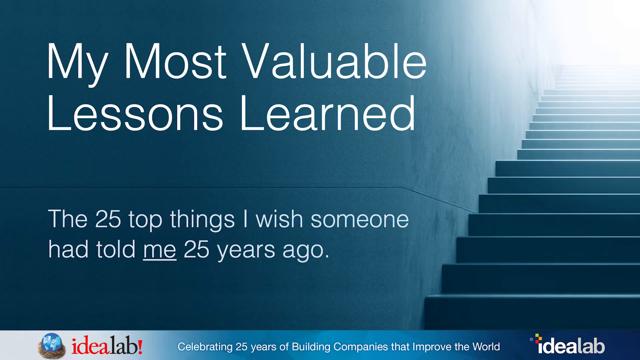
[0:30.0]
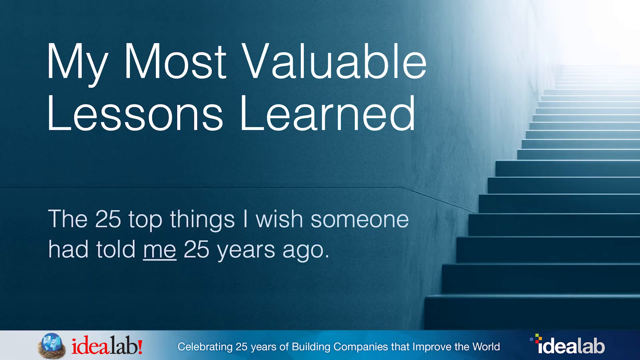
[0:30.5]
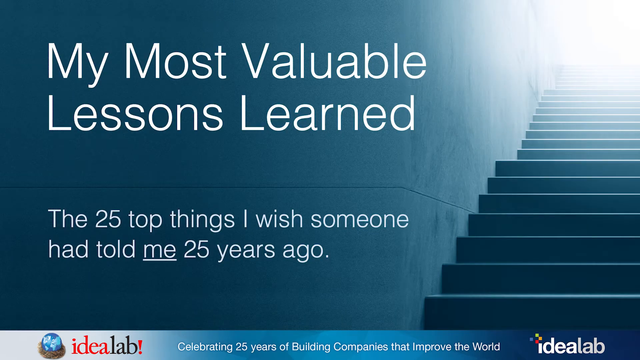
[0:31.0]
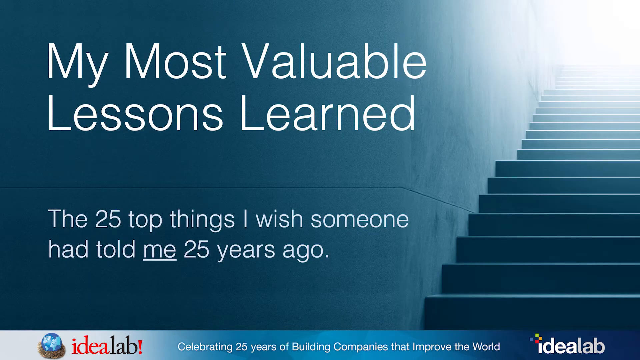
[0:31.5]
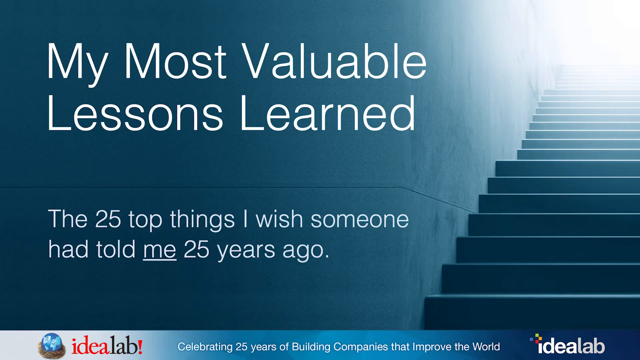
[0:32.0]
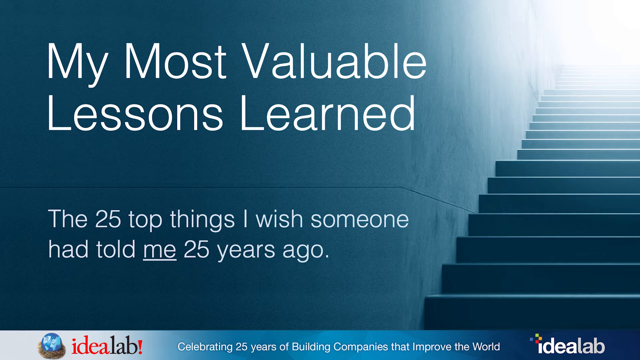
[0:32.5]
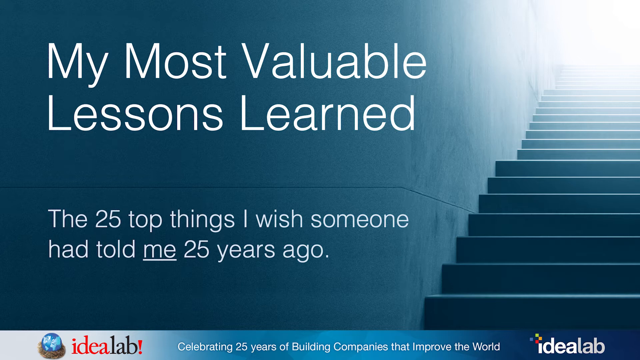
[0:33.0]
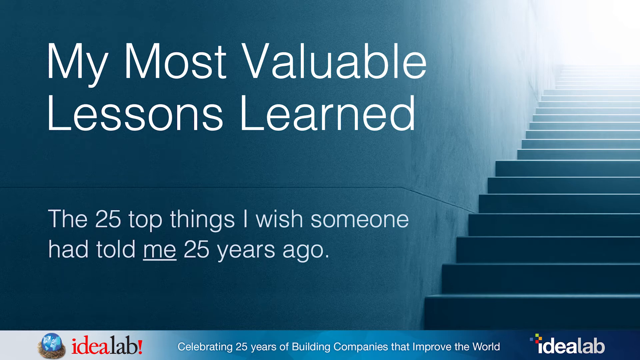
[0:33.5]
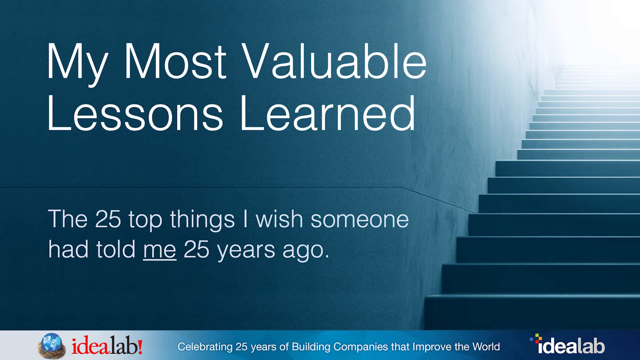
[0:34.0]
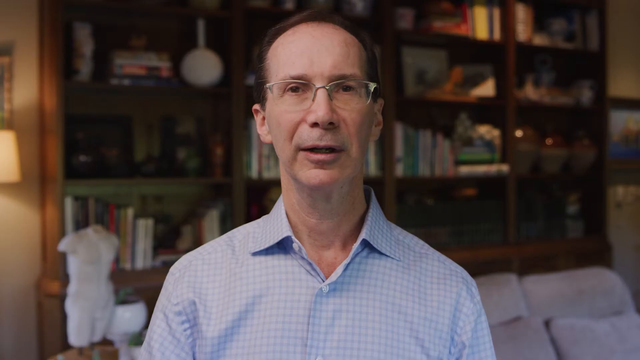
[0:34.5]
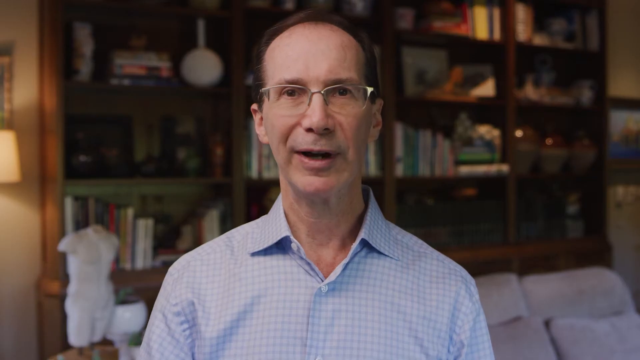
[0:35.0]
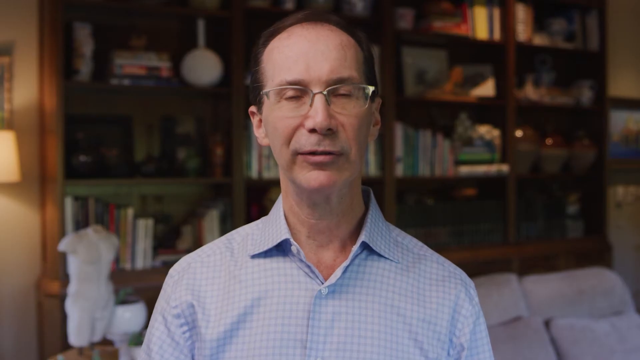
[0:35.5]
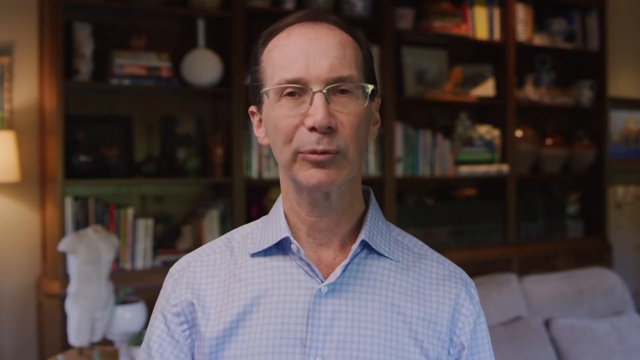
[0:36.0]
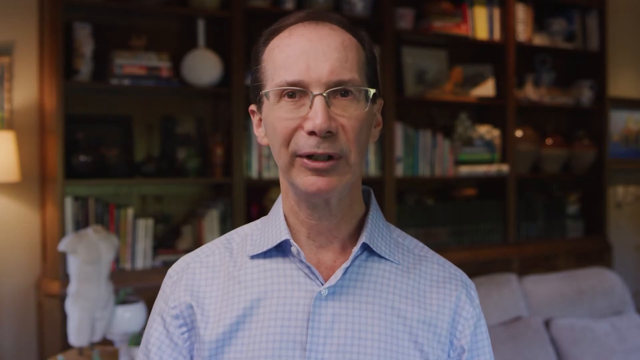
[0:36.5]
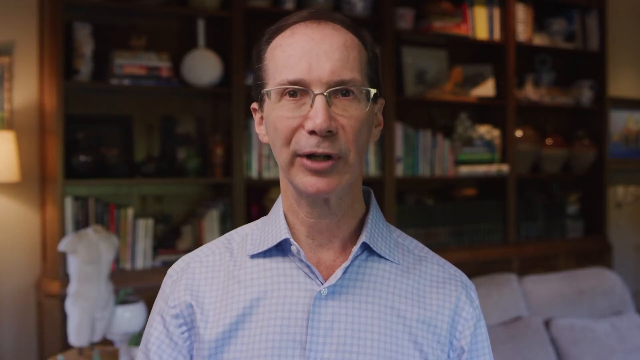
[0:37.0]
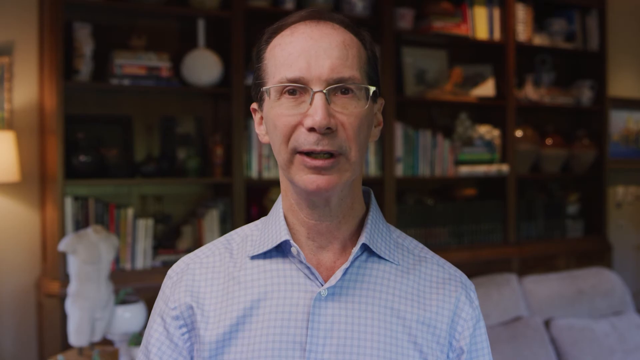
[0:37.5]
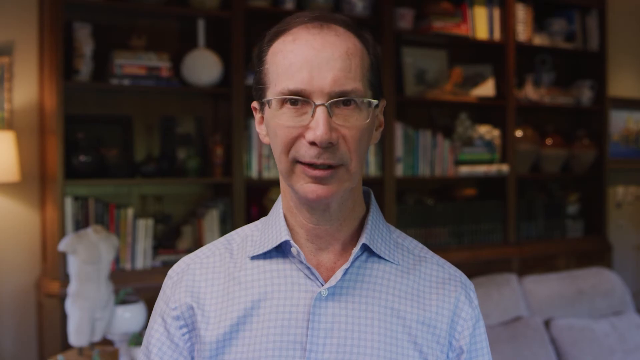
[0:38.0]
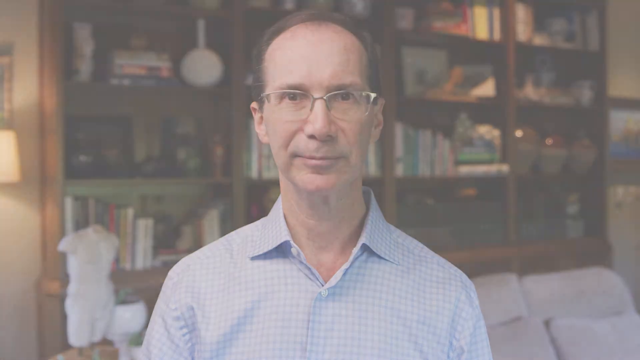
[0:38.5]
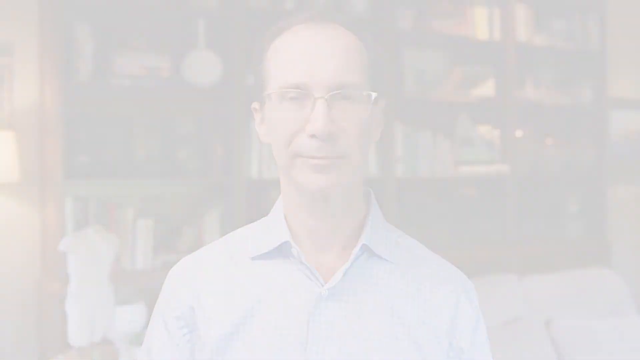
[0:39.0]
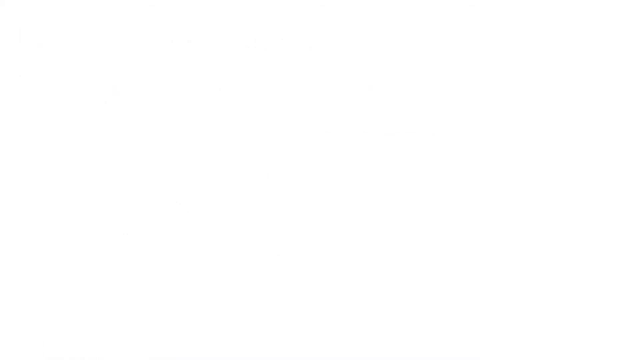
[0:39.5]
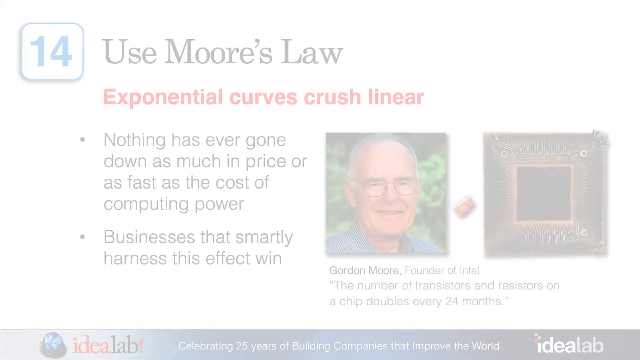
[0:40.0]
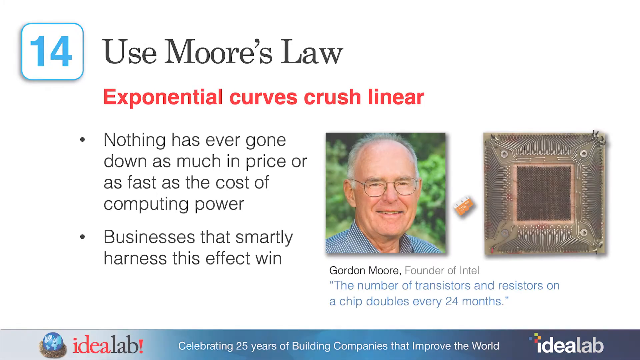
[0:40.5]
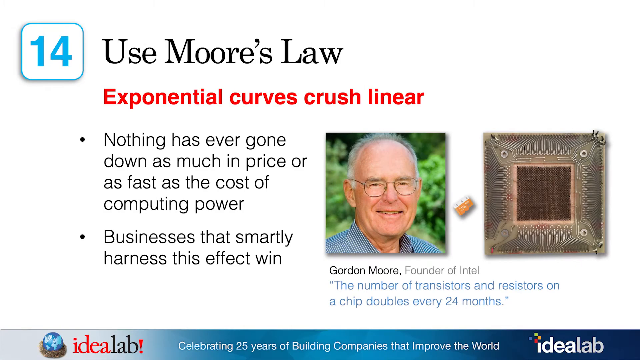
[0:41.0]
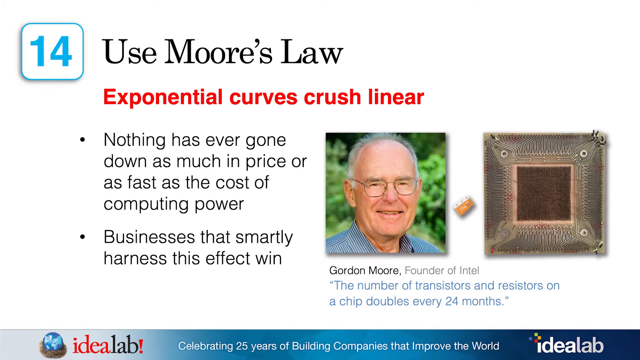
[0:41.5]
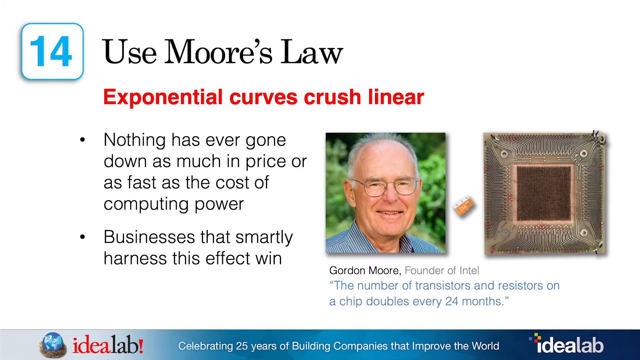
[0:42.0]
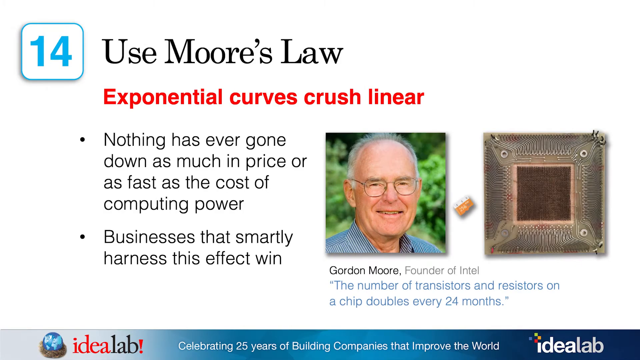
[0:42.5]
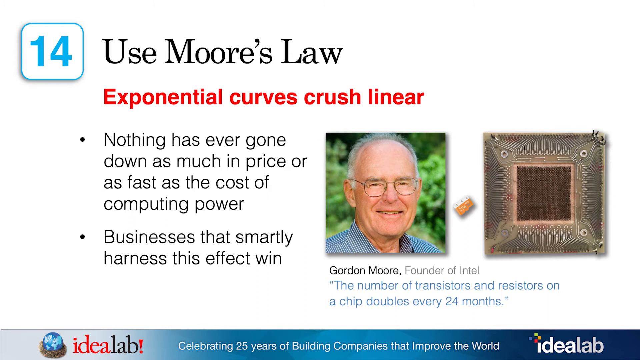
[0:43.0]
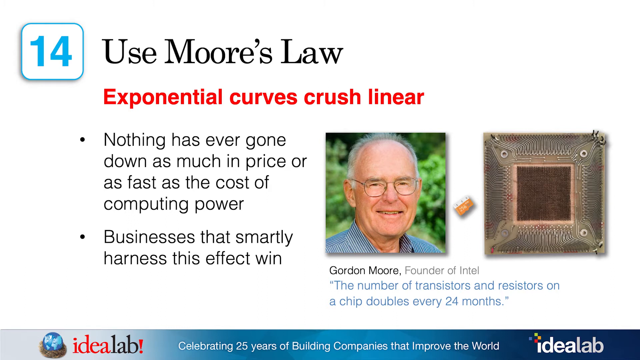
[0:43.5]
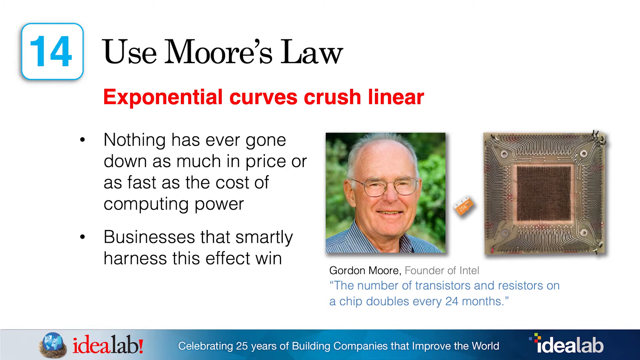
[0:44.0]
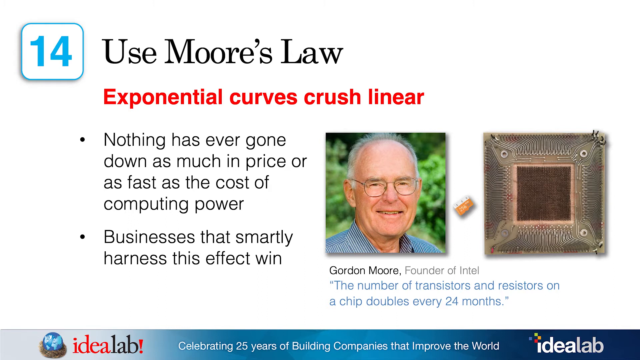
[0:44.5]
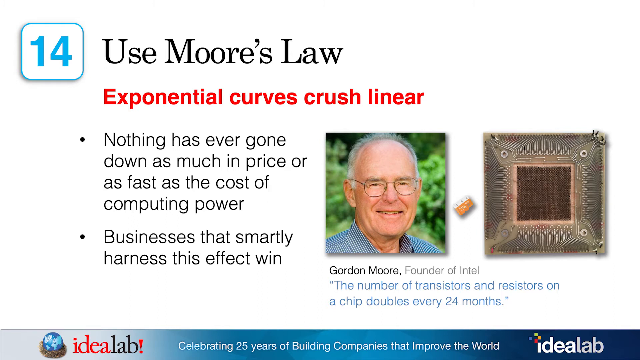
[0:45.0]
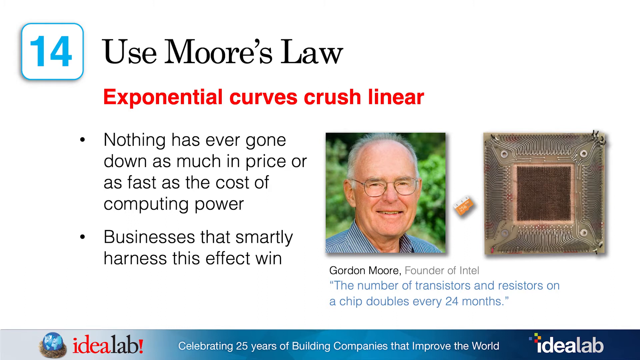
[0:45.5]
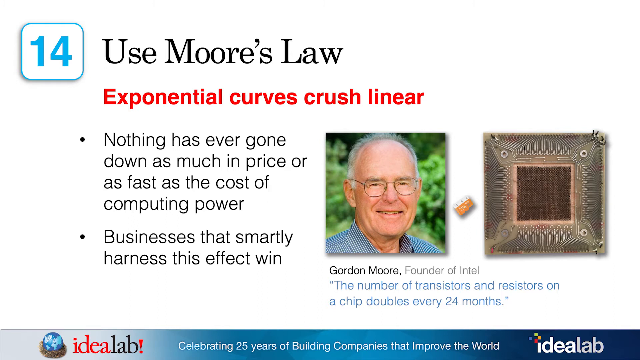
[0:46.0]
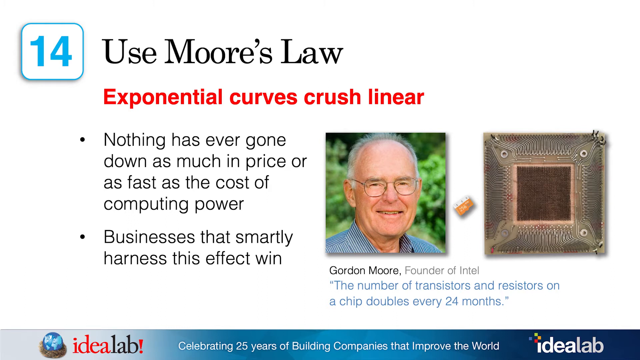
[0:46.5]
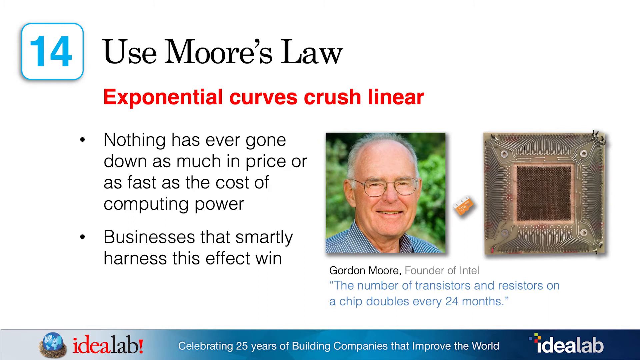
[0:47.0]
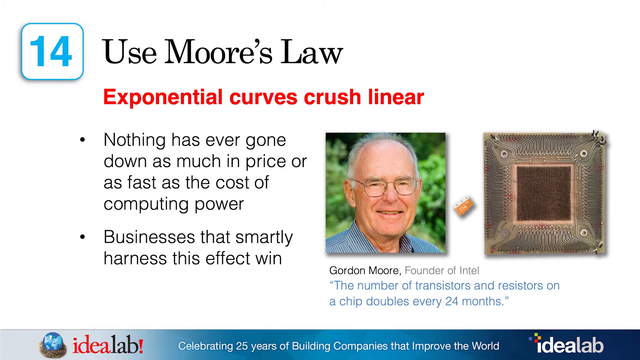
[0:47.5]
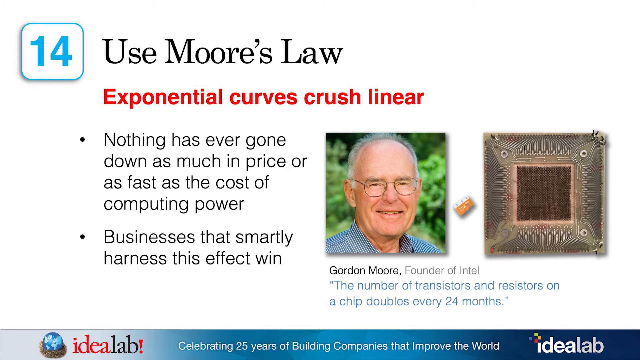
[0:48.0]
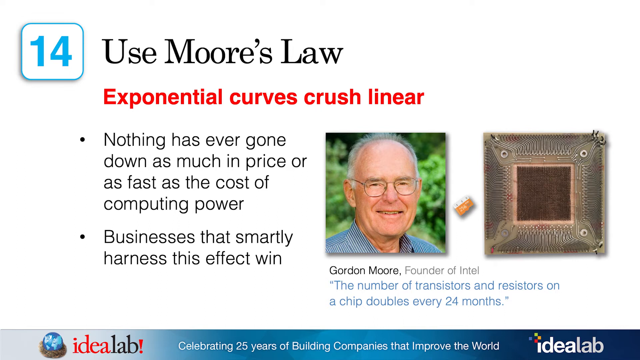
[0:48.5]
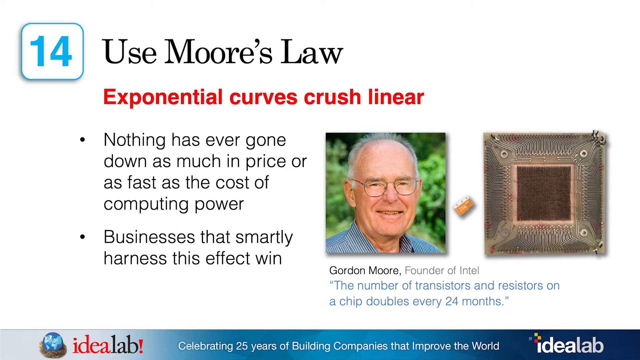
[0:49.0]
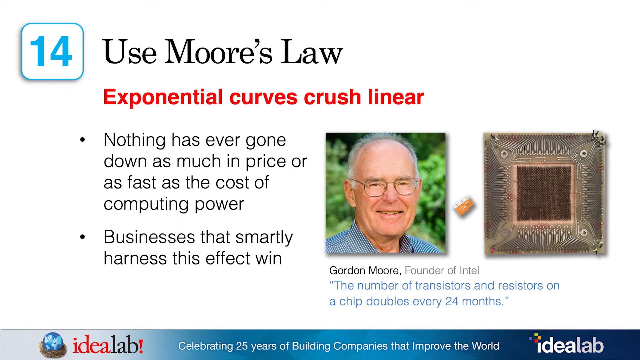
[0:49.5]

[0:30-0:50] A slide carries the title "My most valuable lessons learned. The 25 top things I wish someone had told me 25 years ago." It shows an image of a staircase against a medium blue background, with a bright light at the very top of the staircase. The video cuts to the same man looking into the camera, then to a slide reading "14, use Moore's law. Exponential curves crush linear." Its first bullet point says "nothing has ever gone down as much in price or as fast as the cost of computing power. Businesses that smartly harness this effect win." A picture of a man follows, Gordon Moore, founder of Intel, with a quote underneath: "The number of transistors and resistors on a chip doubles every 24 months."